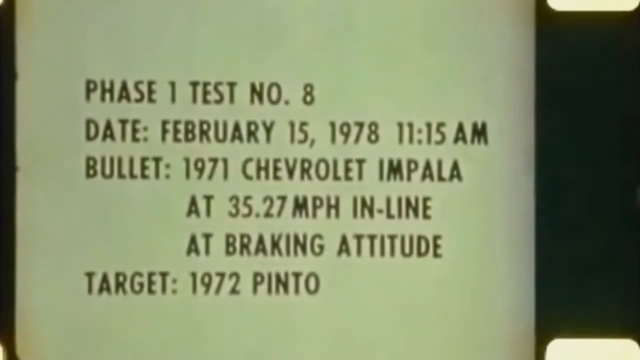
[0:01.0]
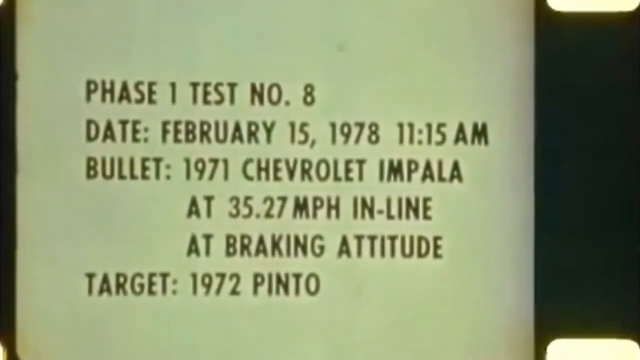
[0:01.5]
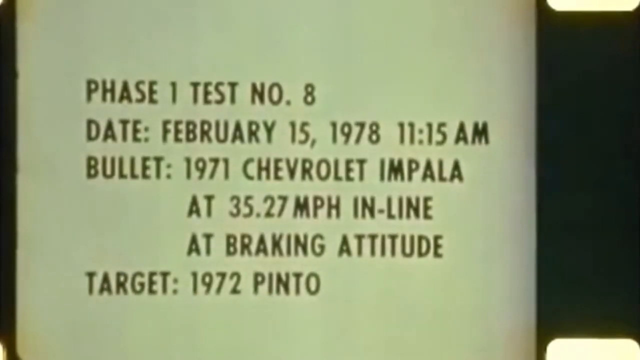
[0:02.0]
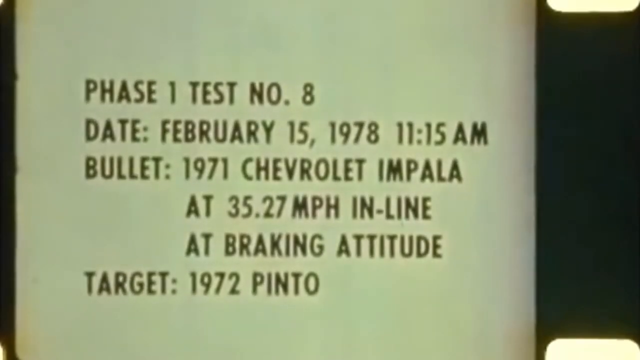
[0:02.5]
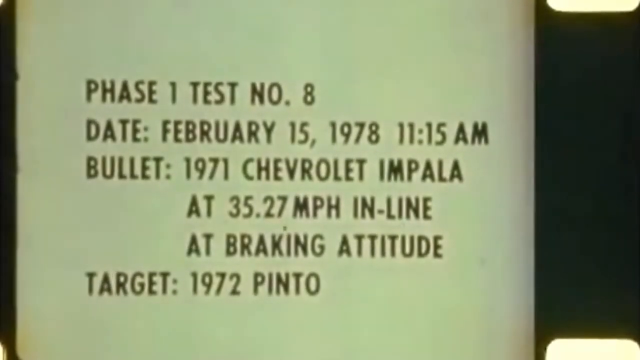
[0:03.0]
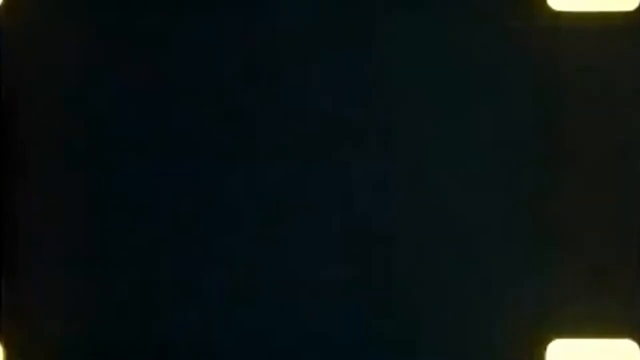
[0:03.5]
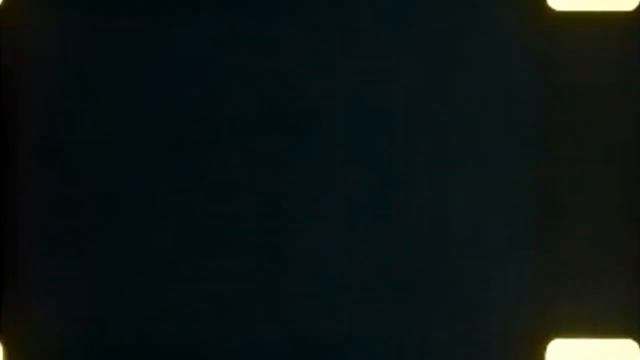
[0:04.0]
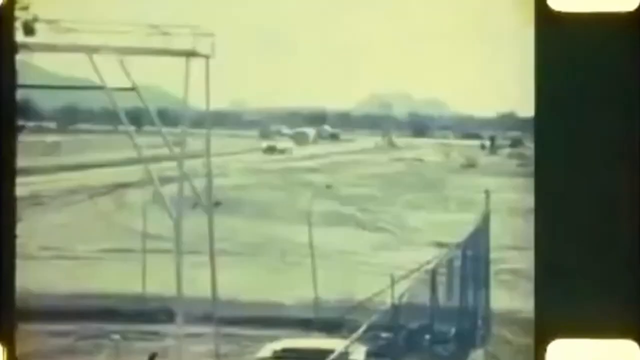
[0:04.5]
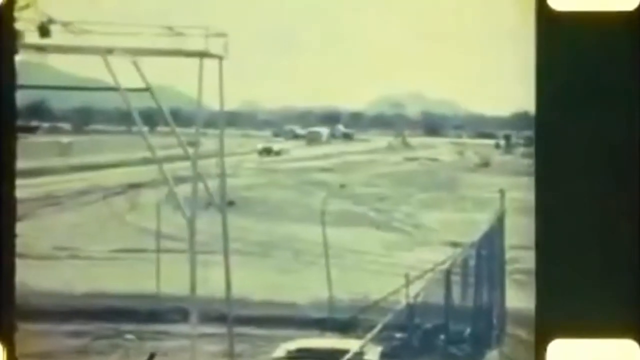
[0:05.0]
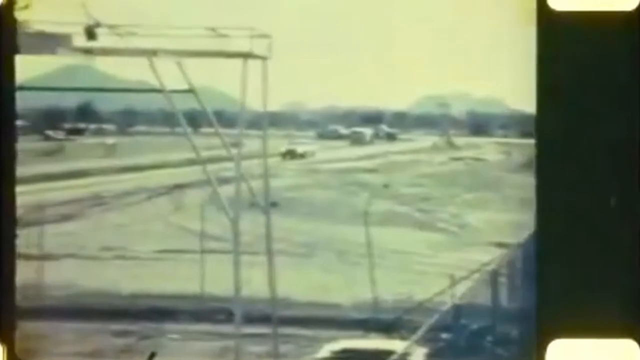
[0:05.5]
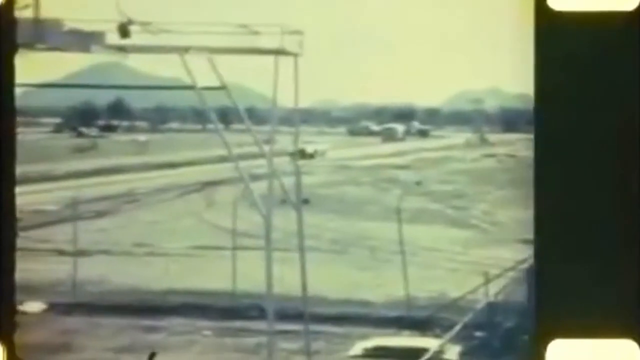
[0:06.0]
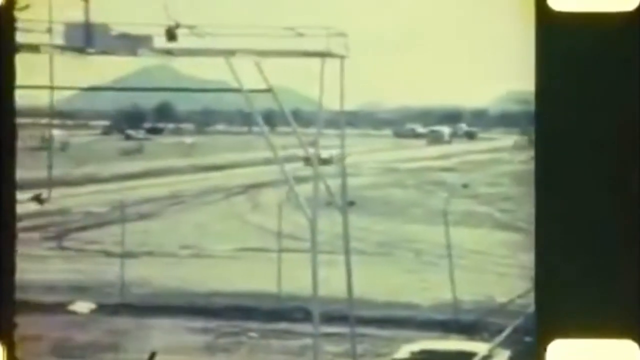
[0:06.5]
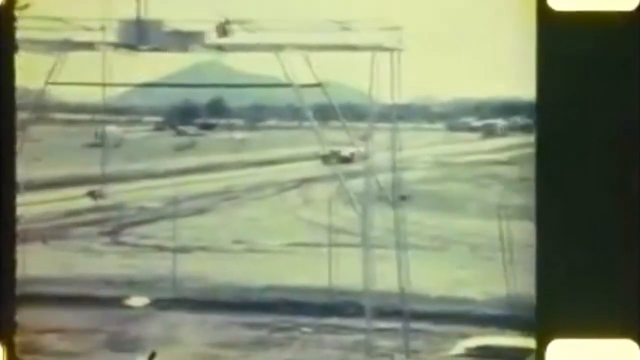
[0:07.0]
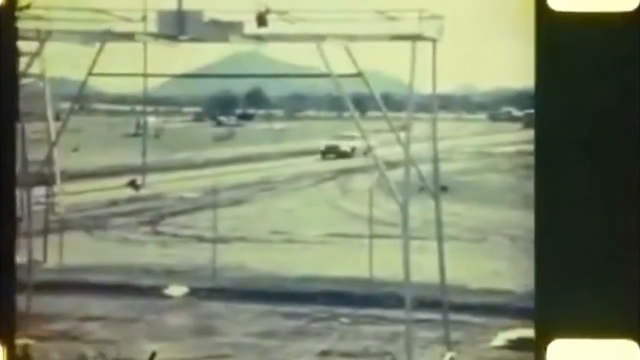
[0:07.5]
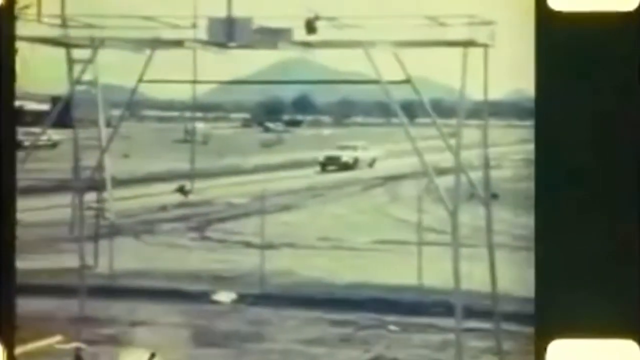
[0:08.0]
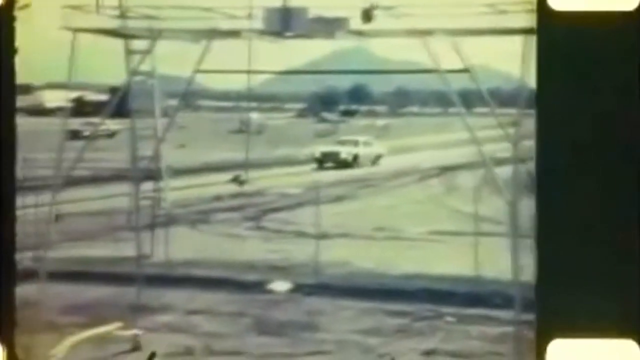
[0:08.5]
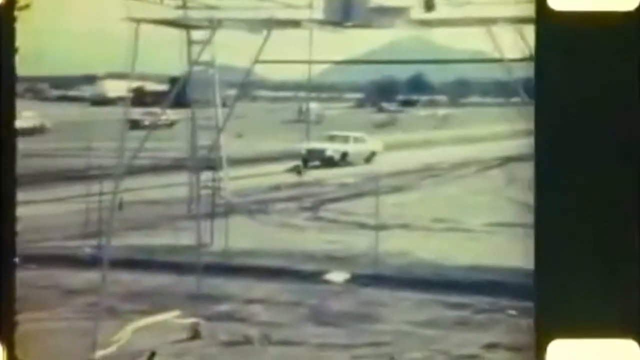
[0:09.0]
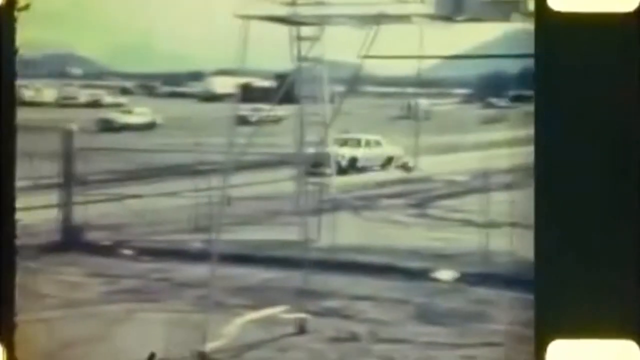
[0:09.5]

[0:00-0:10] The video opens on a ticket with a white background. It reads "phase 1, test number 8," and underneath is the date "February 15, 1978, 11:15 AM." Below that are the words "bullet," "1971," "Chevrolet" and "Impala," then "AT 35.27 miles per hour in line," then "AT breaking aptitude," and beneath that "target: 1972 PINTO." The shot holds on this screen for a moment before the screen goes black and the video switches to black-and-white footage. Outdoors, a car drives down a street; the sun appears to be shining brightly even though the image is black and white. The car moves very fast, its headlights seem to be on, and it appears to be white or some light color. It drives straight down the street, and then the driver's side of the car is in view.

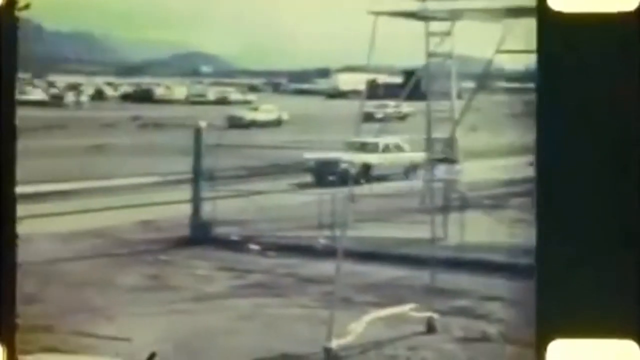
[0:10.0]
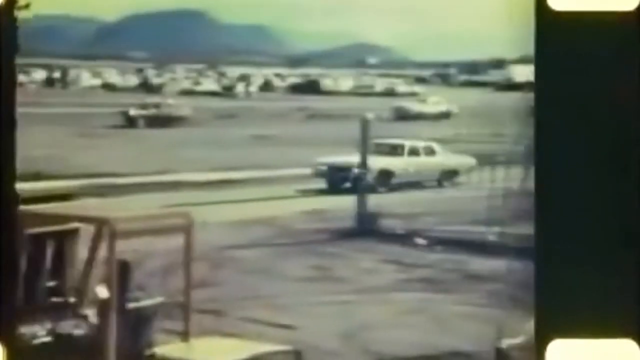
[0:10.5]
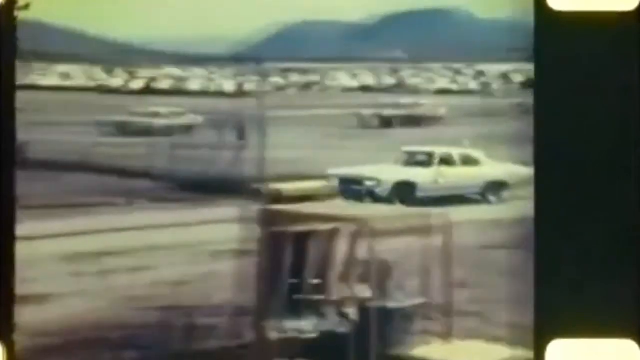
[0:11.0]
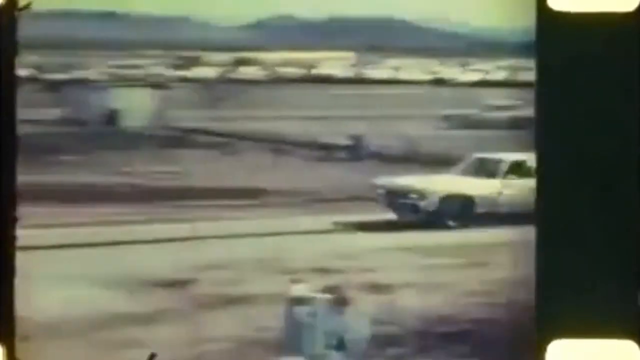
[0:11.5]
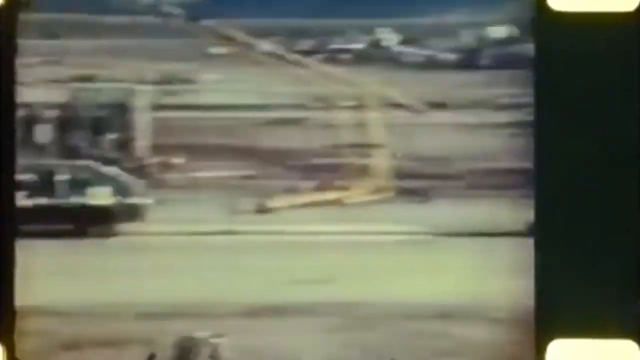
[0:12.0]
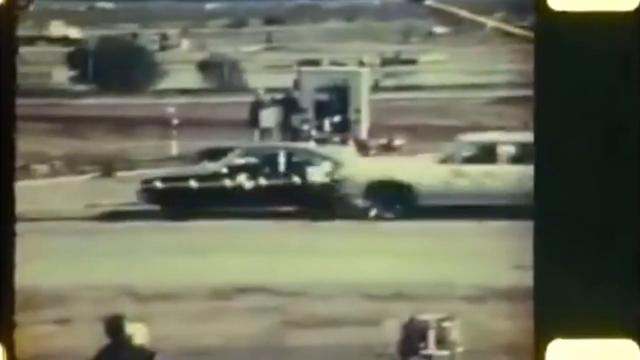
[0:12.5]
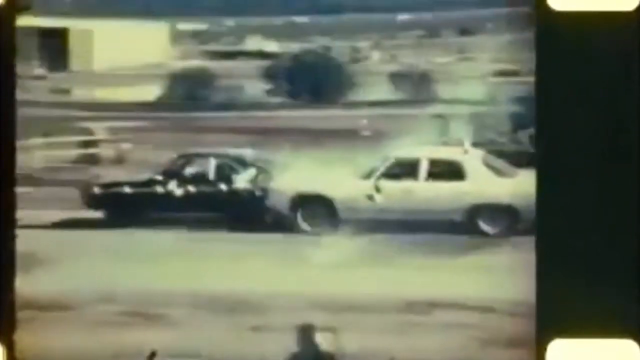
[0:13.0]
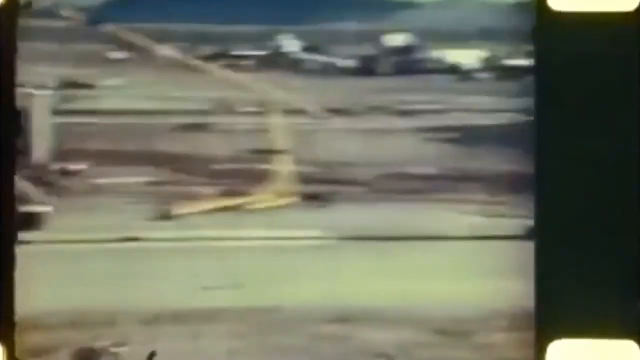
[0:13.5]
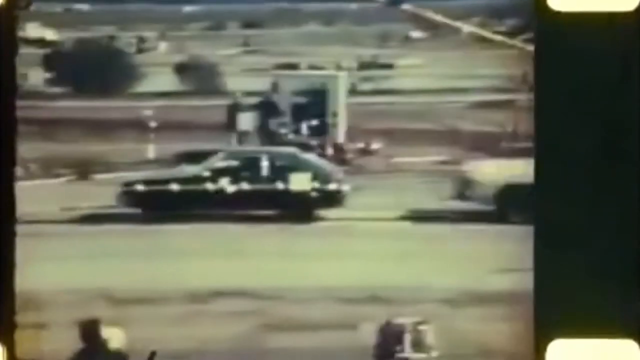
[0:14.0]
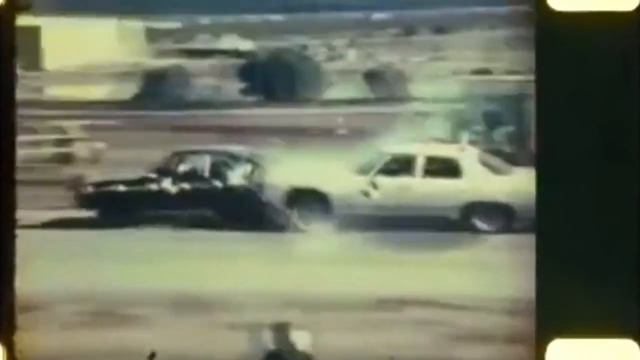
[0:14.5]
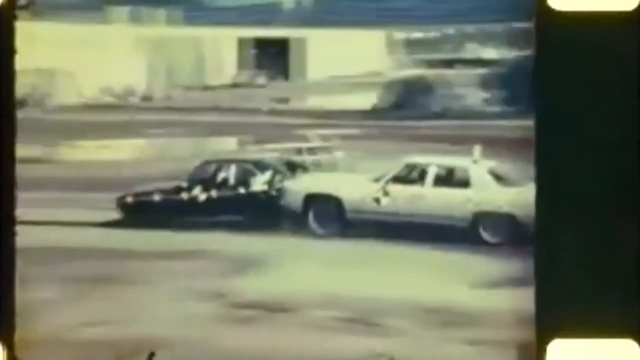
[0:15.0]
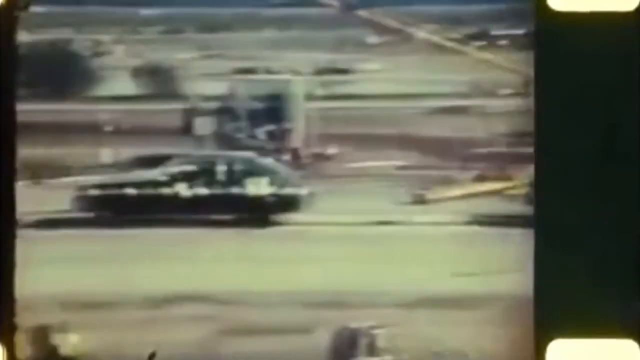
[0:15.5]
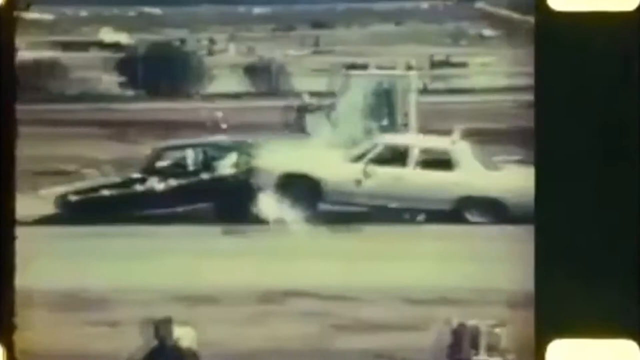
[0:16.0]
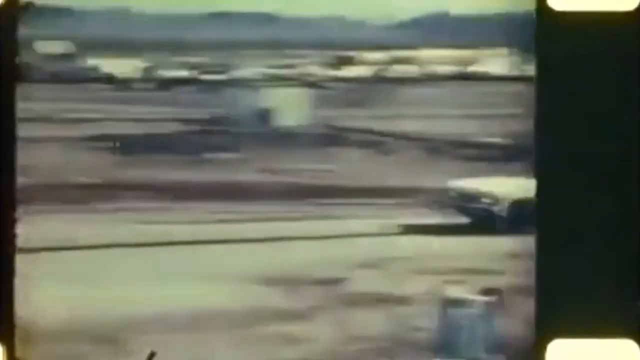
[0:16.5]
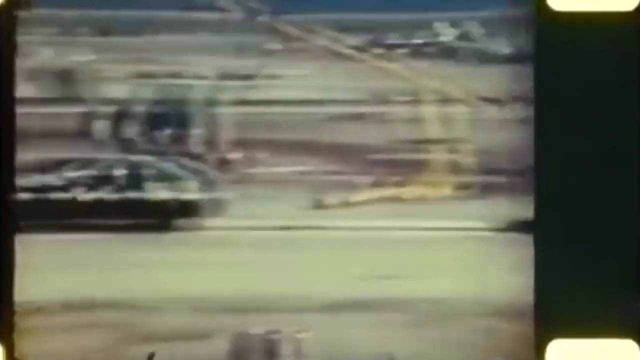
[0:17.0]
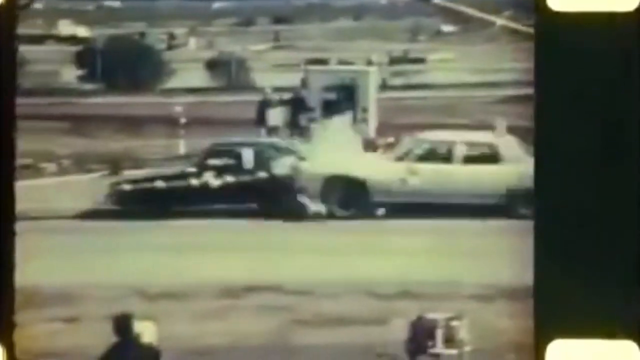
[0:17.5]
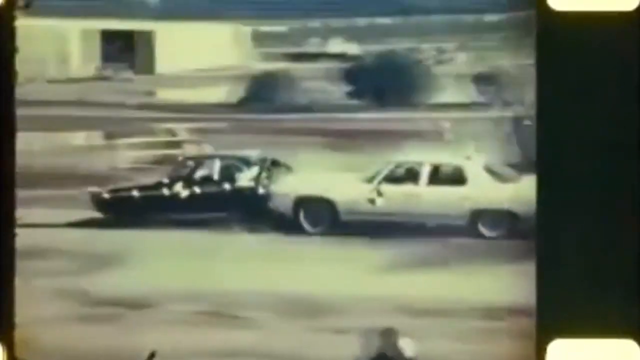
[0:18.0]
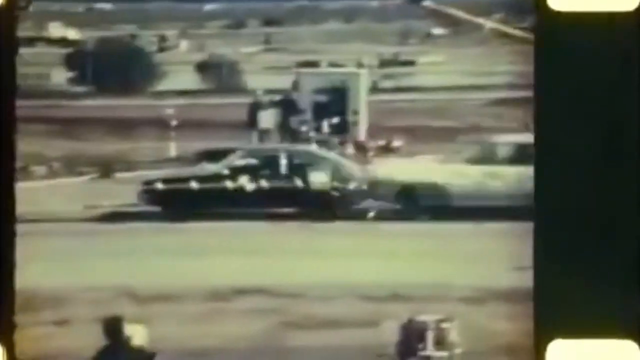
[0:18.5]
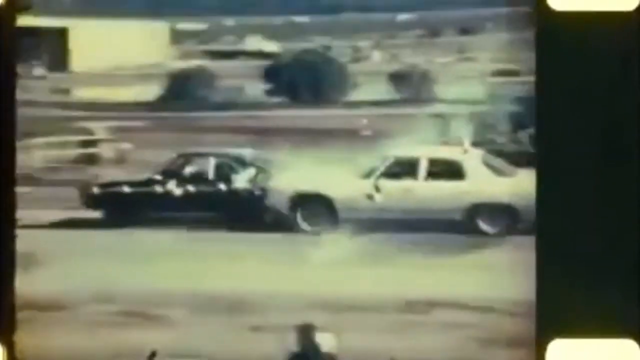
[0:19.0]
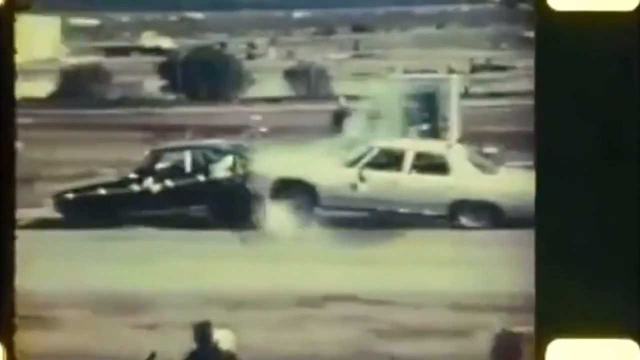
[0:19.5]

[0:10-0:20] In an outdoor black-and-white scene, a car appears to be driving down a street that seems to run right alongside a parking lot. The passenger side of the car is visible, and then the car speeds down the street, apparently with its headlights on, moving very fast along a street in front of the viewer. It comes out of the gate of the parking lot. An empty car is parked on the side of the street, and the moving car smashes into its rear end, pushing it forward several feet.